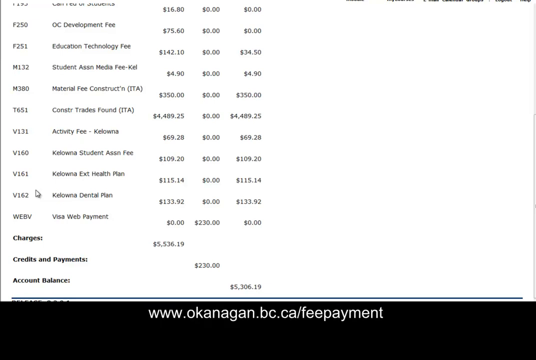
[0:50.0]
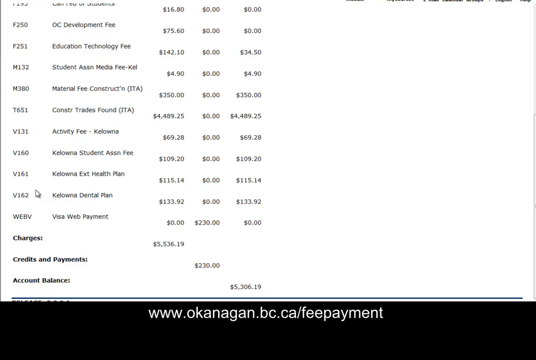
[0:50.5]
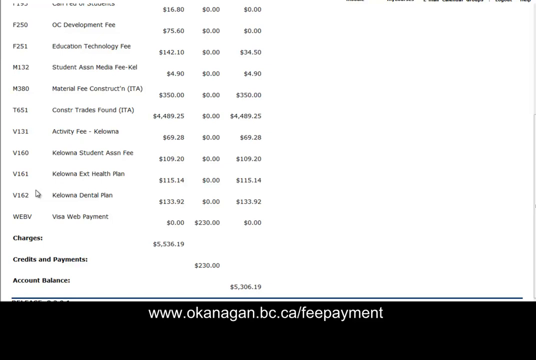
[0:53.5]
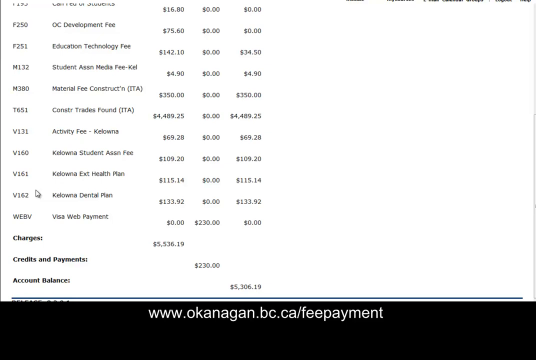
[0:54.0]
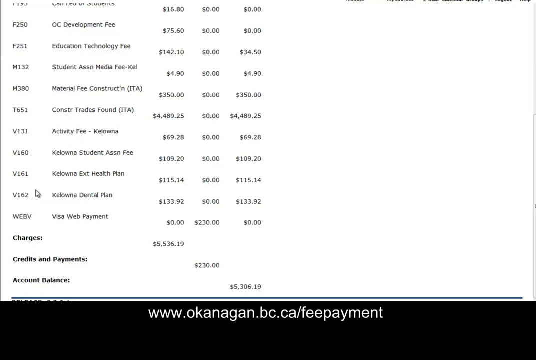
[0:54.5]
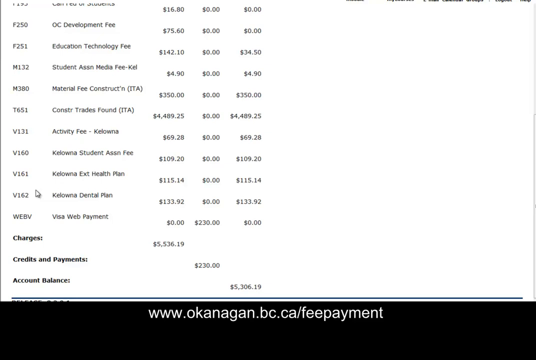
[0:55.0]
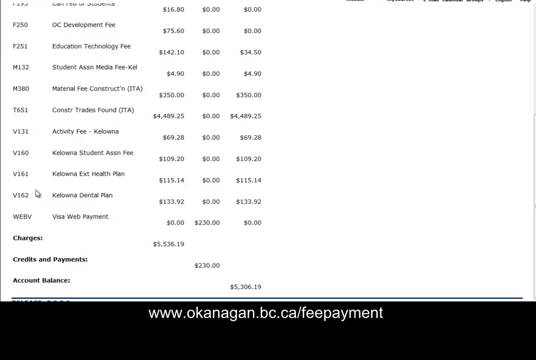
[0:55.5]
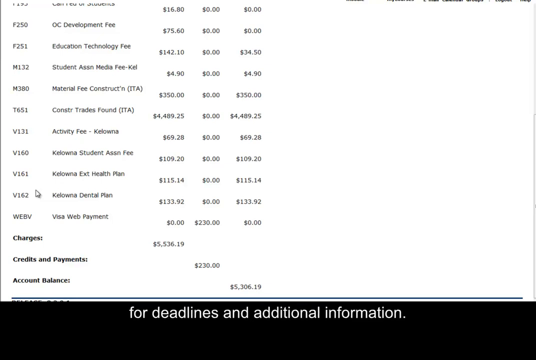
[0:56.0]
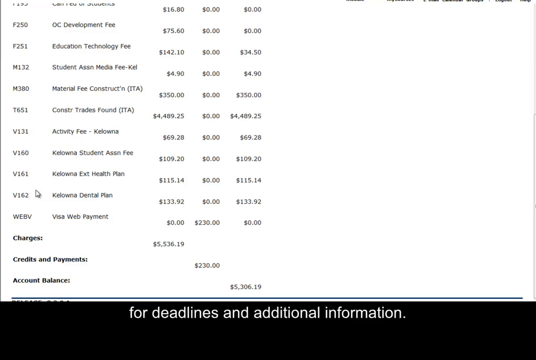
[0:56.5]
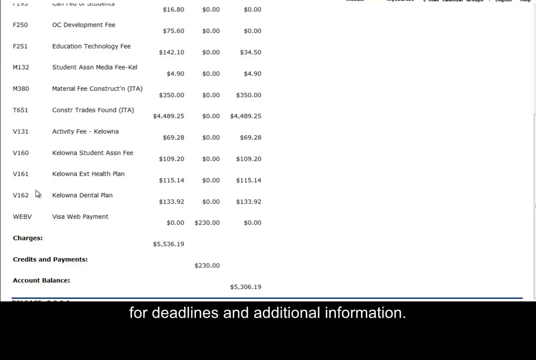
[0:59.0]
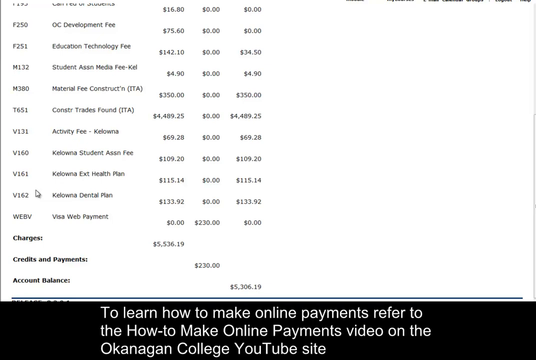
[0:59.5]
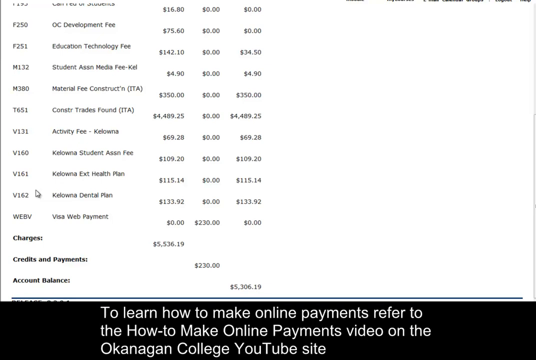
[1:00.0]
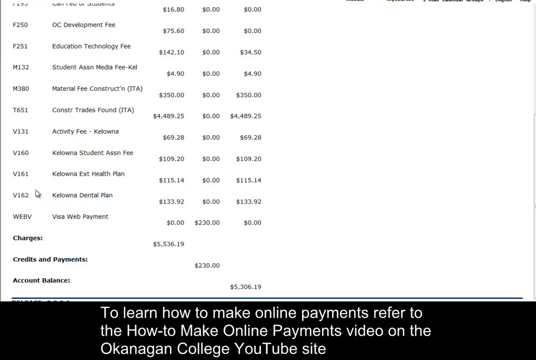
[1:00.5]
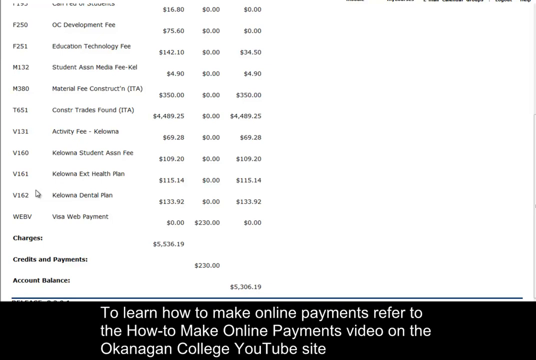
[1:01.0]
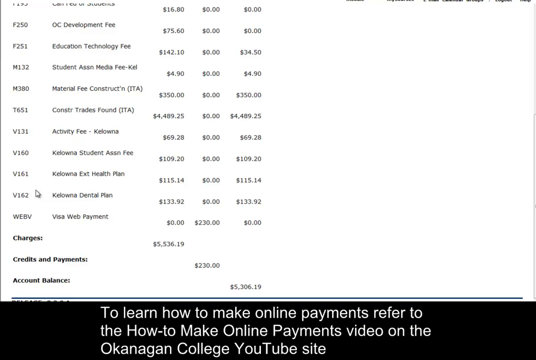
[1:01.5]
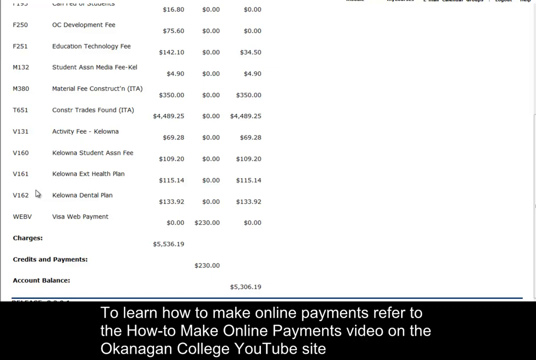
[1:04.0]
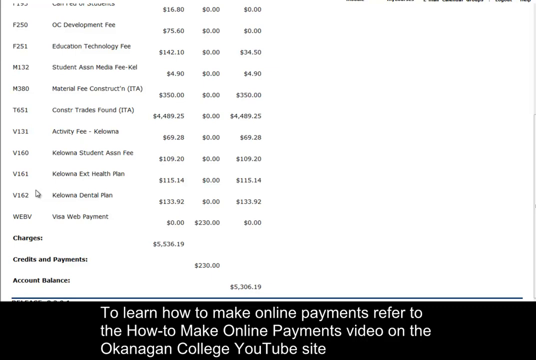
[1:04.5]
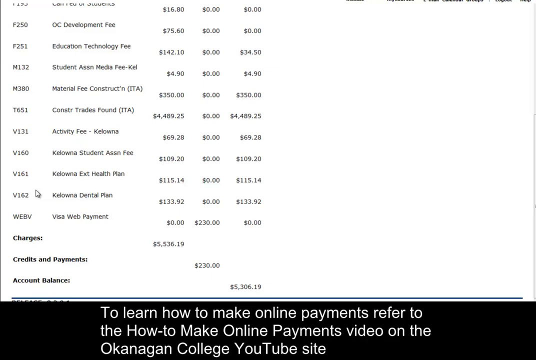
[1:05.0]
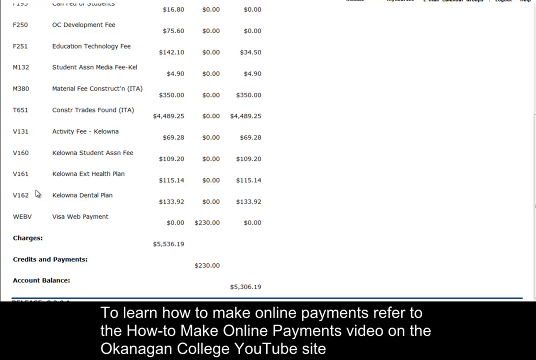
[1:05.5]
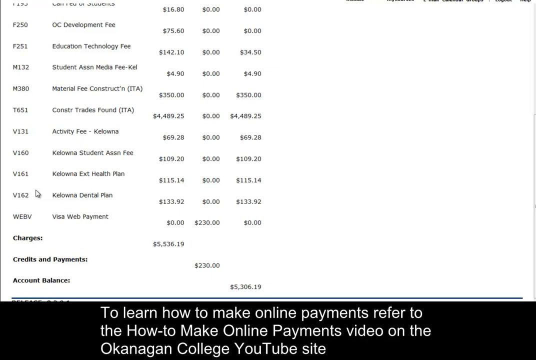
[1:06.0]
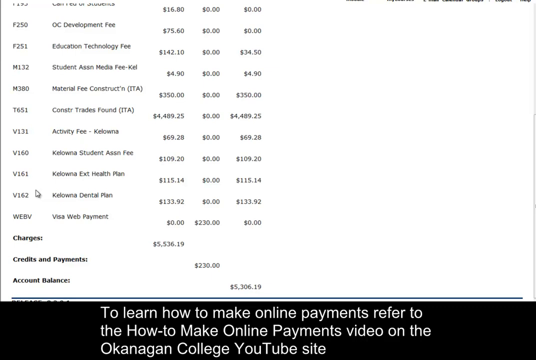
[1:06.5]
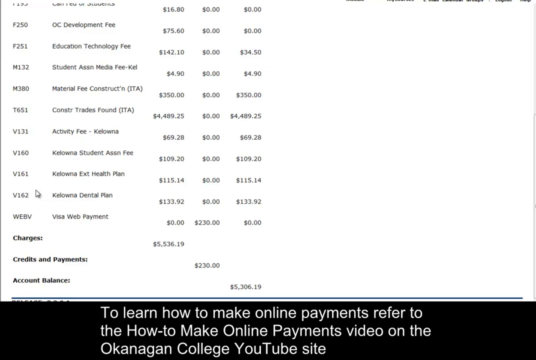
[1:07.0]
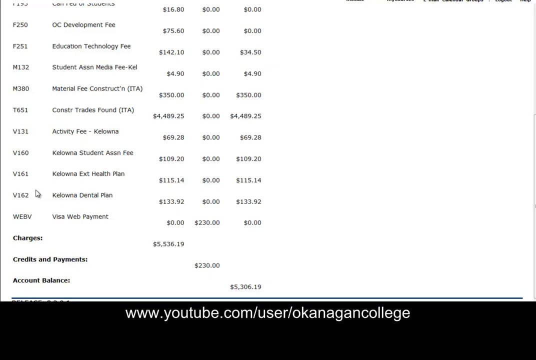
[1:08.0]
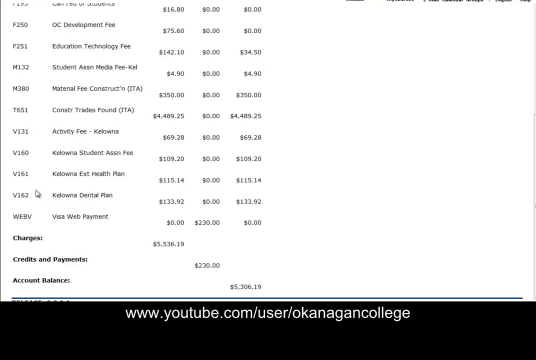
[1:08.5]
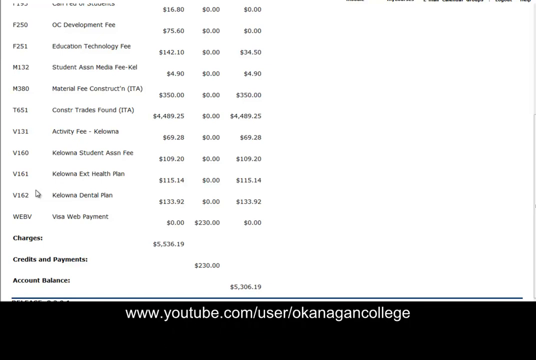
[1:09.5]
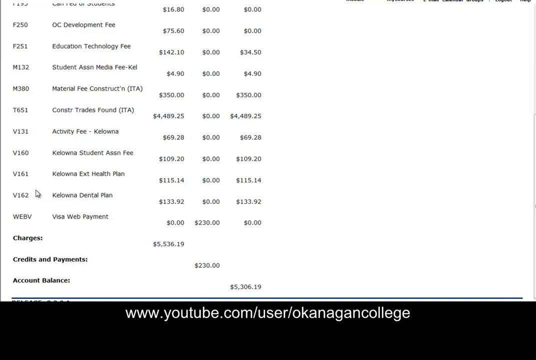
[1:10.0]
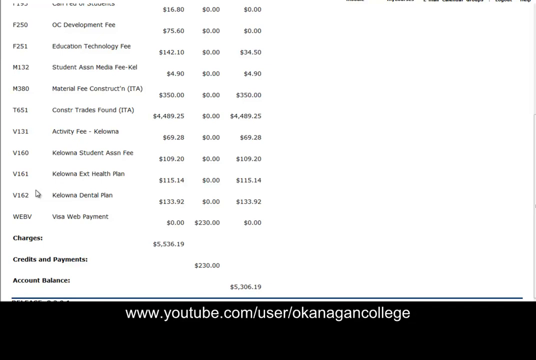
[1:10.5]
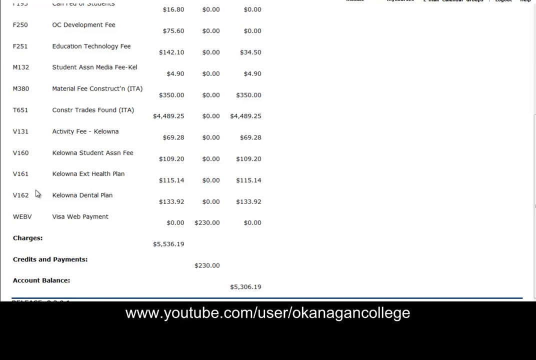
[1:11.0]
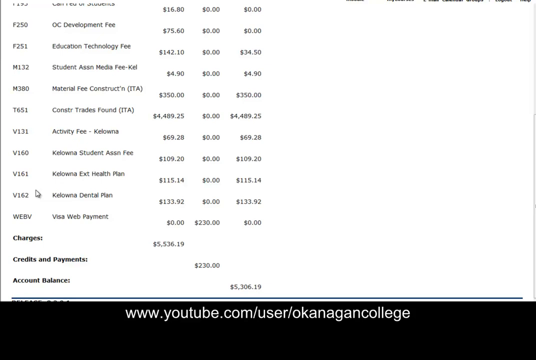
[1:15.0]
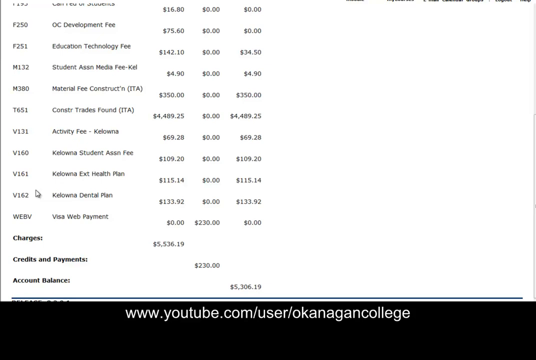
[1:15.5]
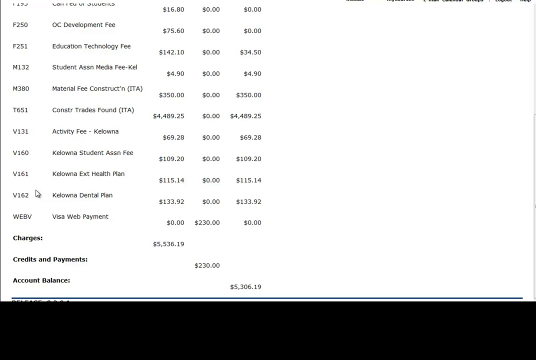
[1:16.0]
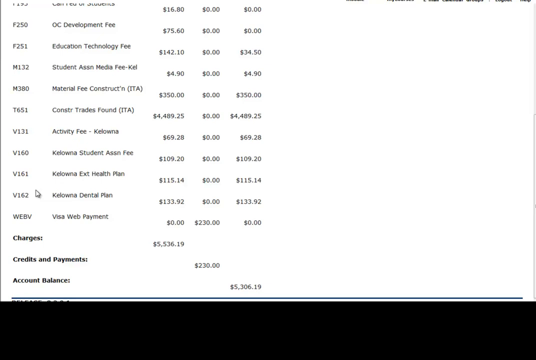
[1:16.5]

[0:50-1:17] The page shows what appears to be a list of balances, seemingly including an OC development fee, an education technology fee, a student assistant media material fee, an activity fee, a Cardona student assistant fee and others, down to a visa work payment. At the bottom there seem to be charges, credits and payments, and an account balance, and below that there seem to be instructions about deadlines and timelines and how to make online payments through the website. The video seems to be a step-by-step guide for a student to view their student records and financial records to keep track of the fees at the college. The college website also seems to have many tabs for students to get information.